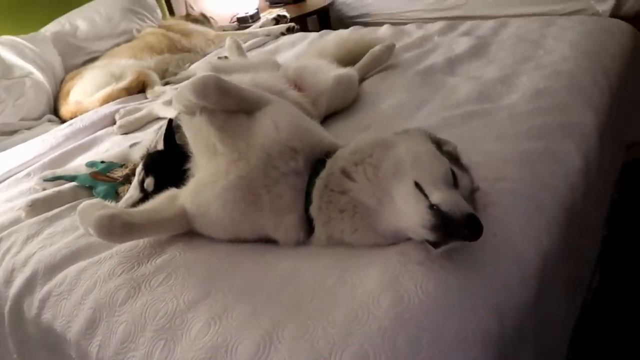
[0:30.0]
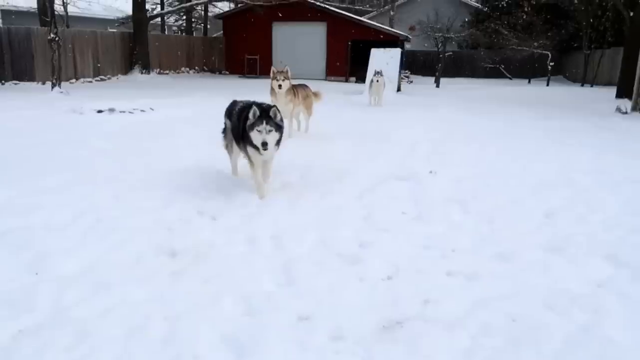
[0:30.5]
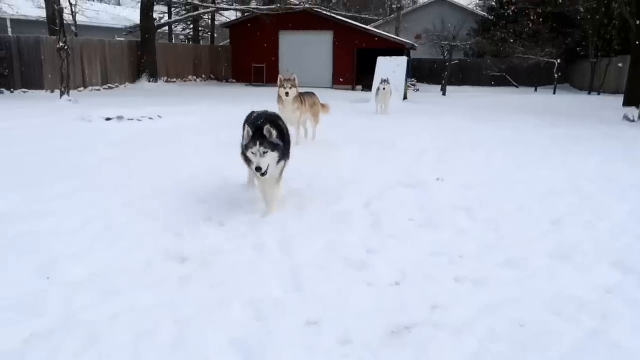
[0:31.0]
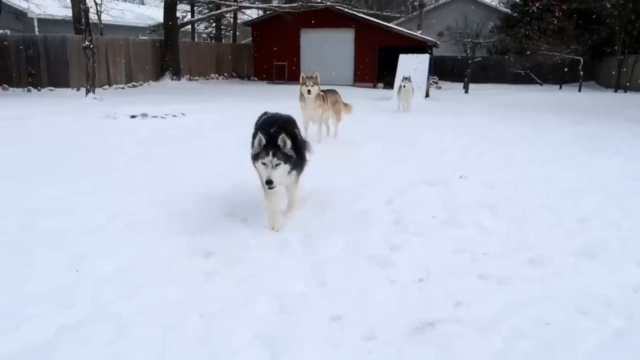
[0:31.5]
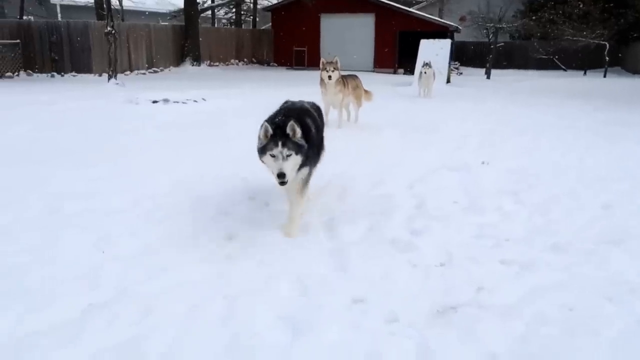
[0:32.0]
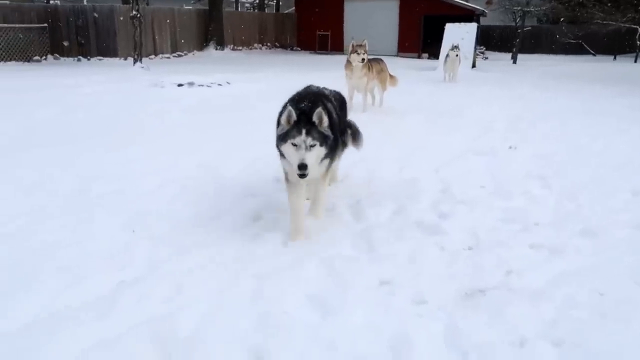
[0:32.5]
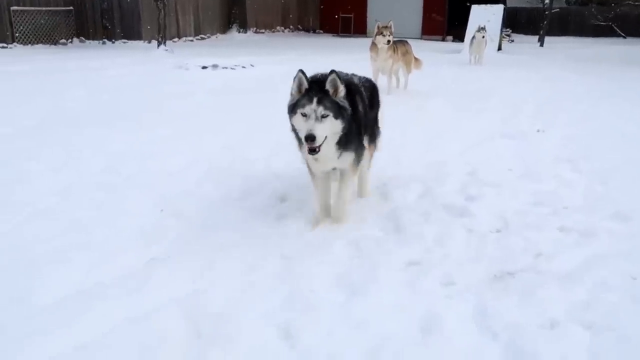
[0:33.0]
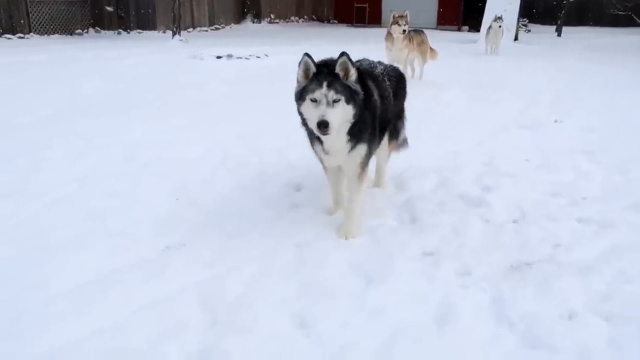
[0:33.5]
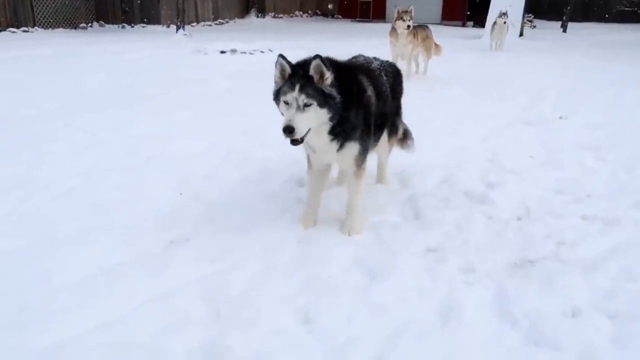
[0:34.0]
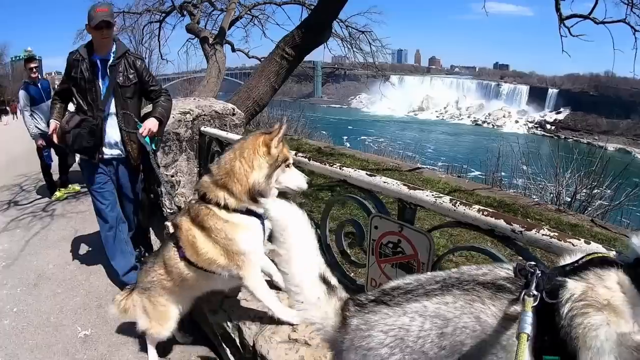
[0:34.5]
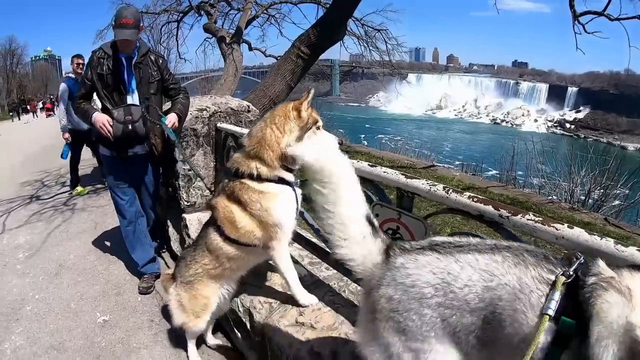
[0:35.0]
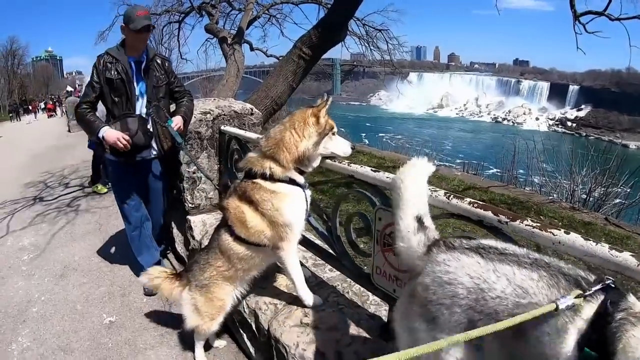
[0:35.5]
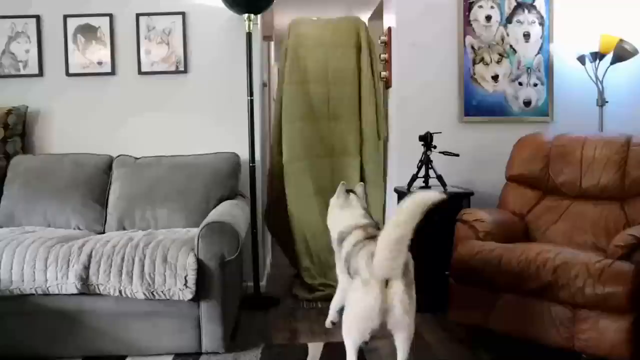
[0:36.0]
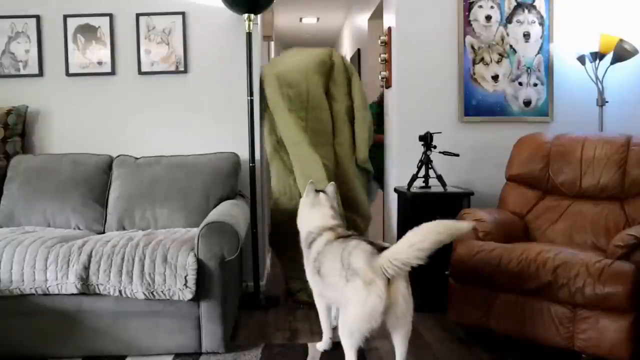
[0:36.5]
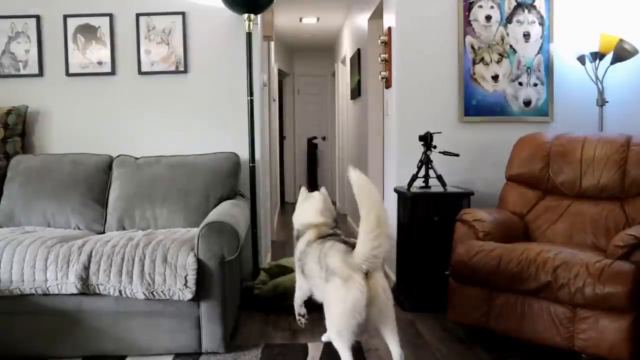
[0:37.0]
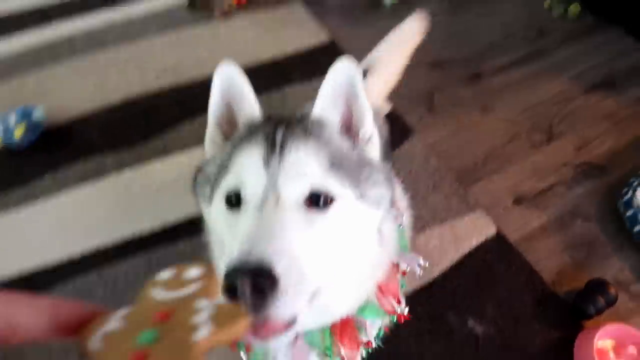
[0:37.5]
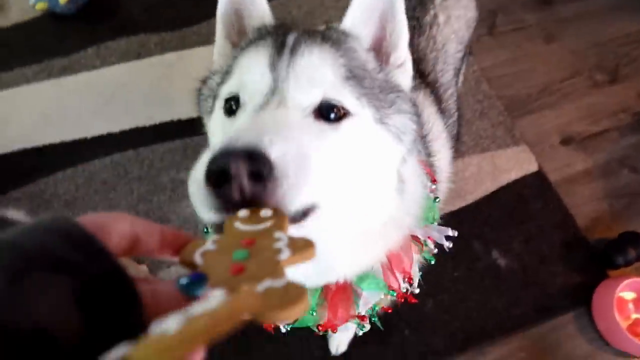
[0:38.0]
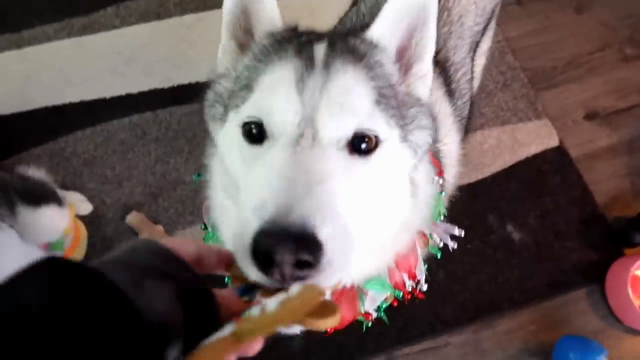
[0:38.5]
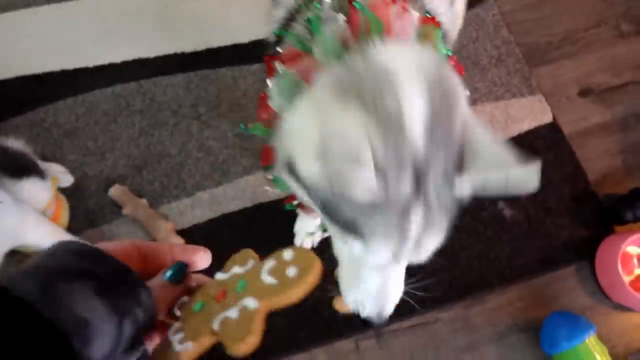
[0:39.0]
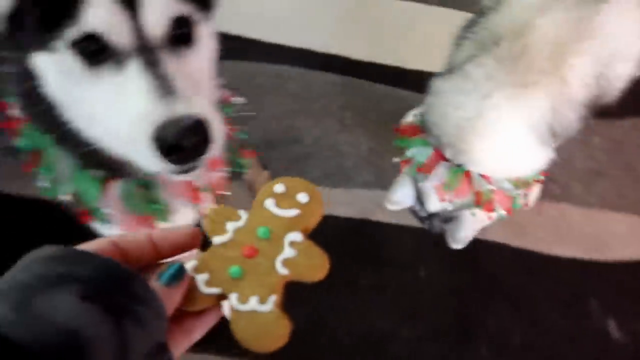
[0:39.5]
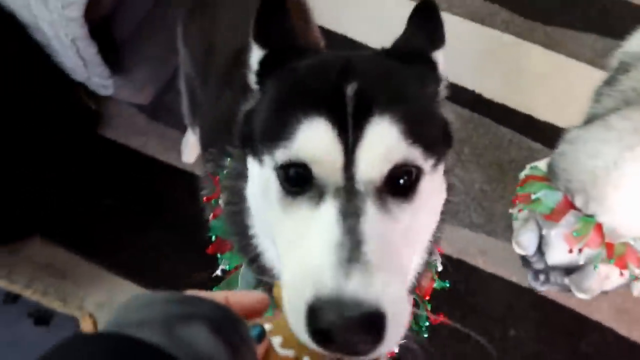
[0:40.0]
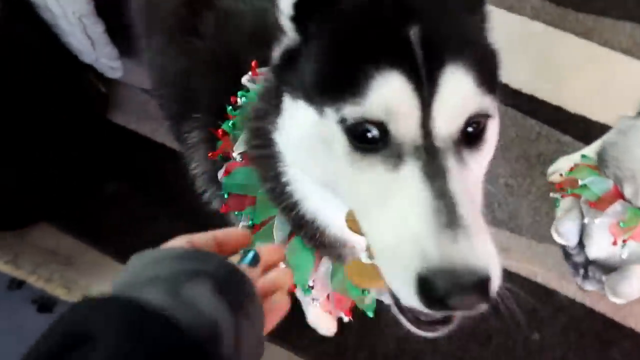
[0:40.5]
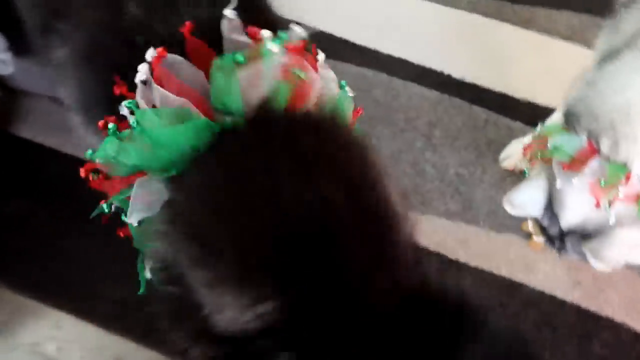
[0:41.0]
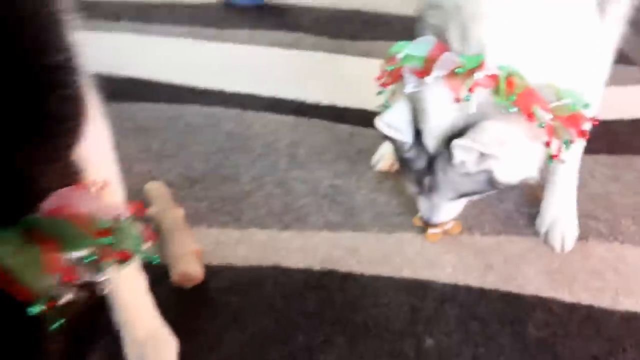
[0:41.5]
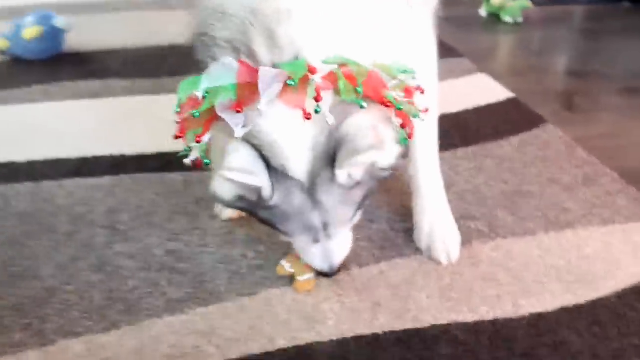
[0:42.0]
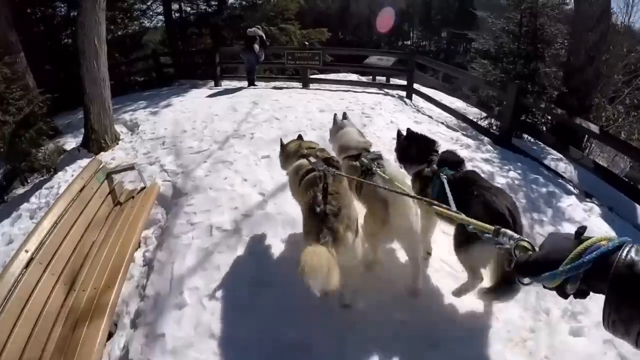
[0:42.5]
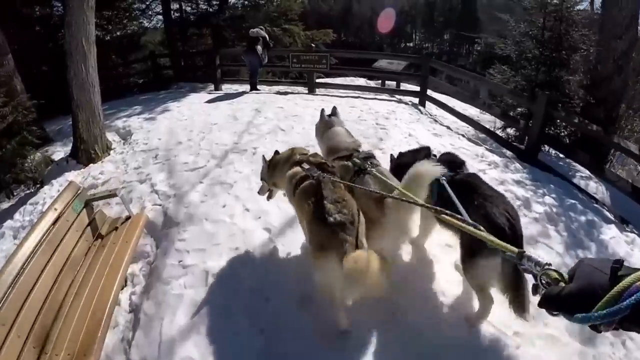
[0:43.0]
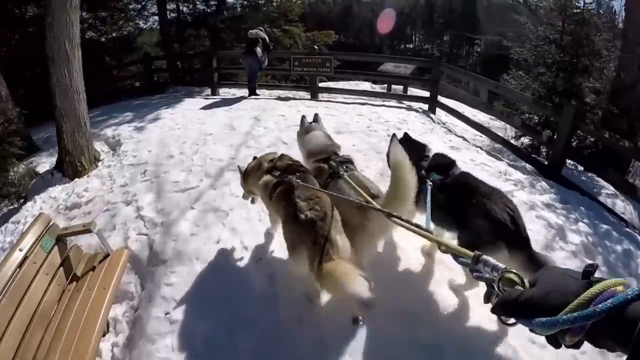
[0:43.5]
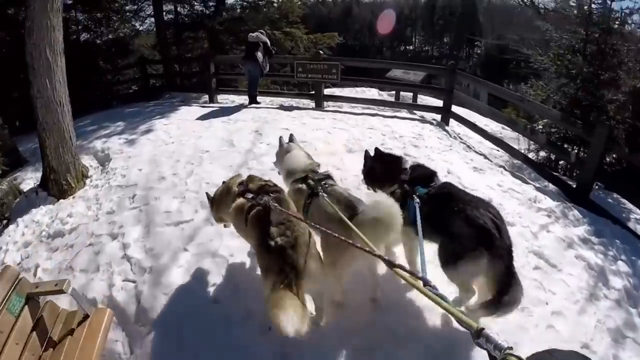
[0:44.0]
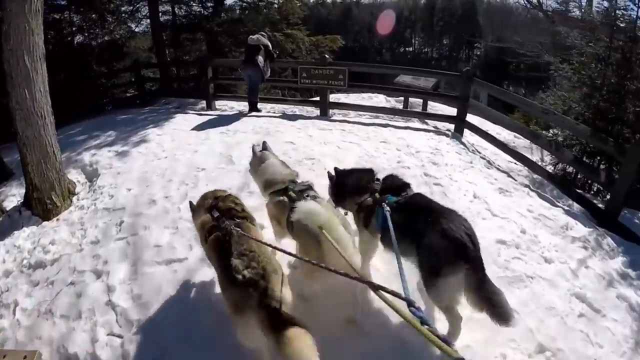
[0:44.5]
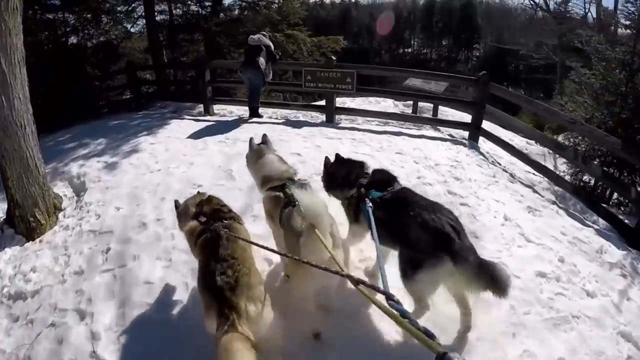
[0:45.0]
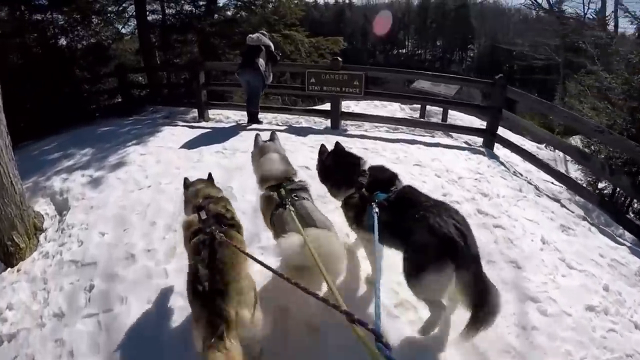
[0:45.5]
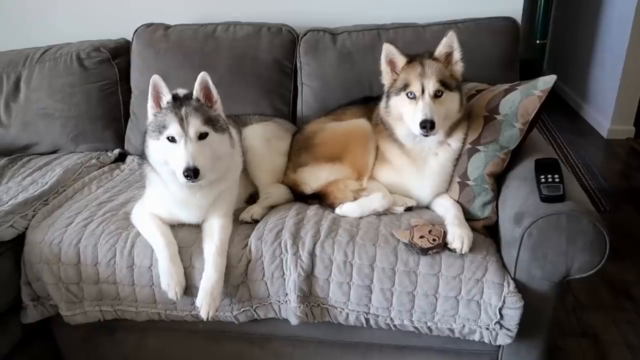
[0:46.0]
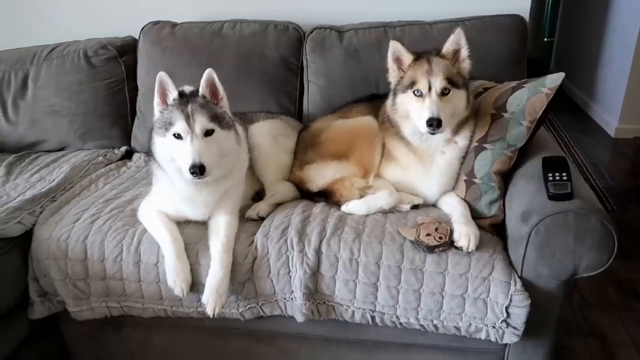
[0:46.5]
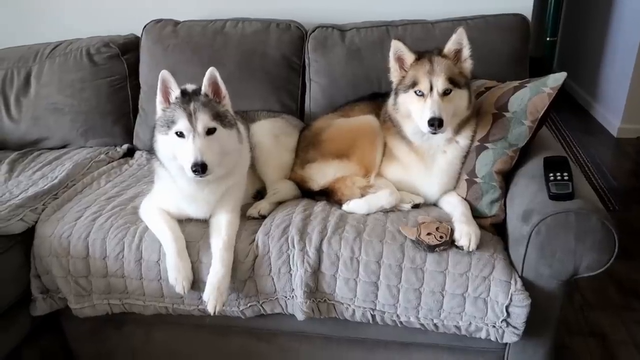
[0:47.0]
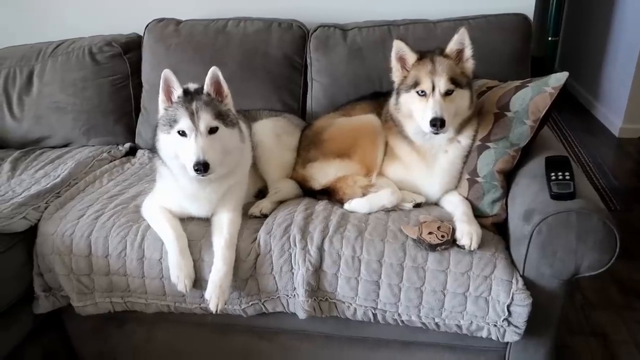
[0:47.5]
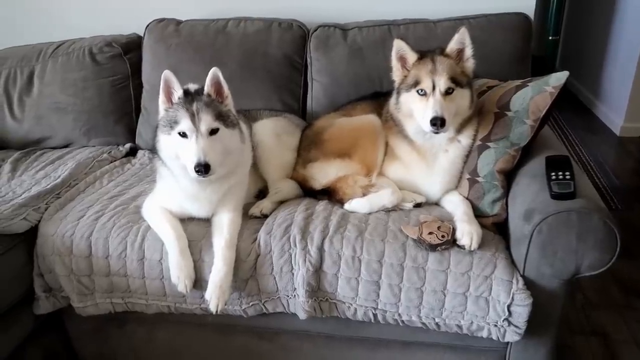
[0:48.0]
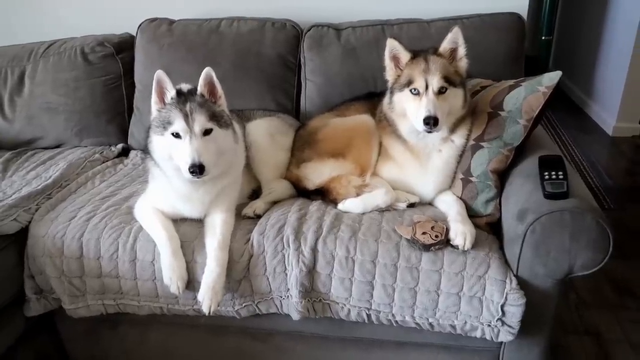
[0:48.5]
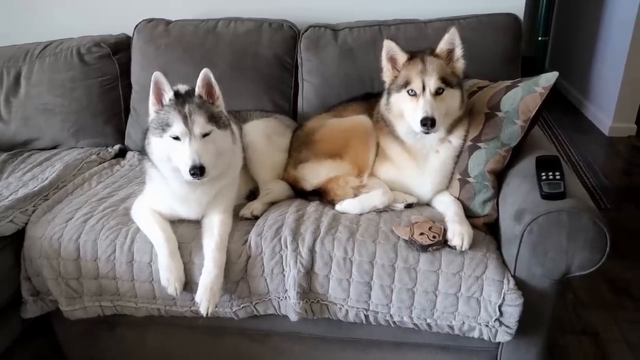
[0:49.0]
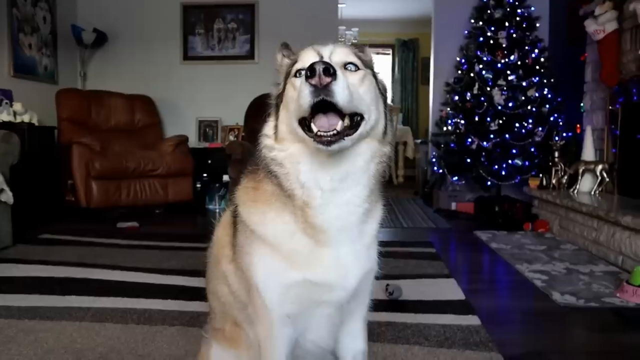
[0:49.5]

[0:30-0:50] The dogs appear in several different settings, with between one and three dogs in each shot. In a snowy setting three of them walk on leashes, and in another two of them sit on a couch staring at the camera. They appear to be doing anything from lazily walking around to energetically exploring their surroundings. At another point, people feed the two dogs gingerbread treats. Elsewhere, in a very snowy backyard, they sleepily look at the camera as they mosey around and sit on the ground.